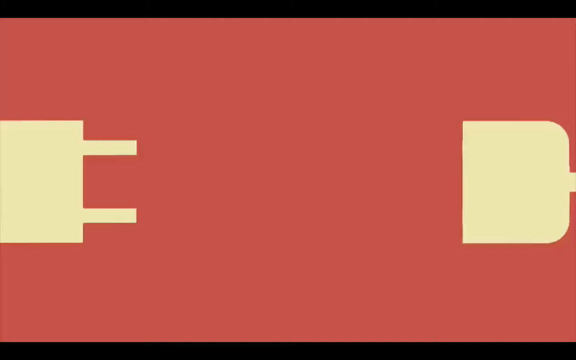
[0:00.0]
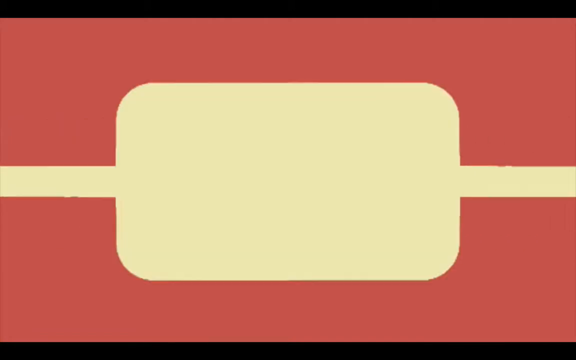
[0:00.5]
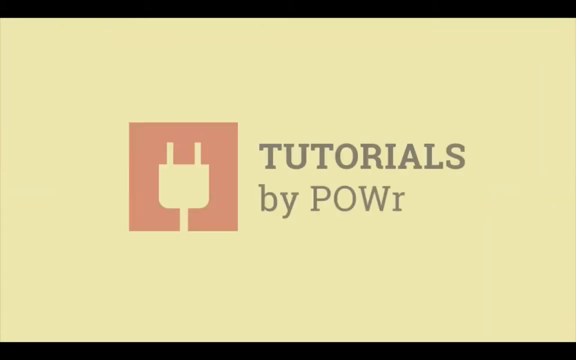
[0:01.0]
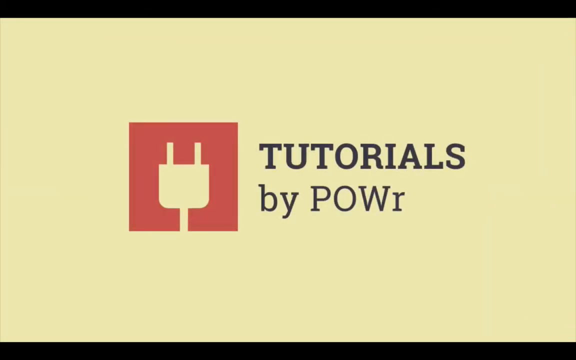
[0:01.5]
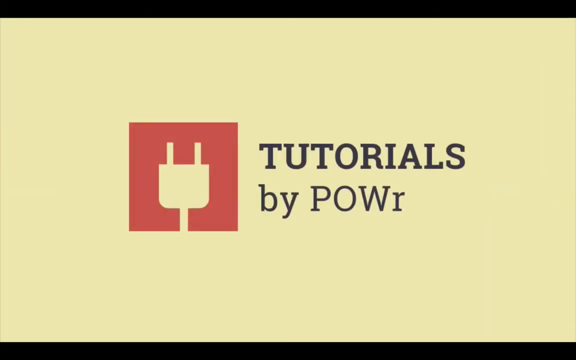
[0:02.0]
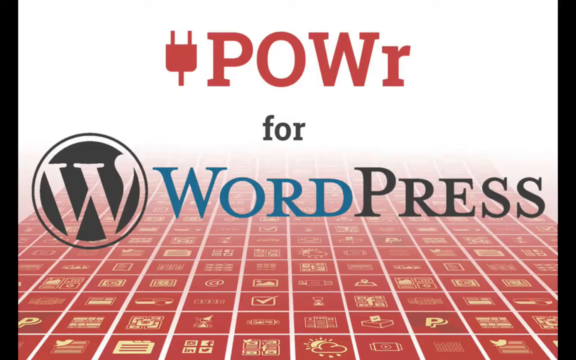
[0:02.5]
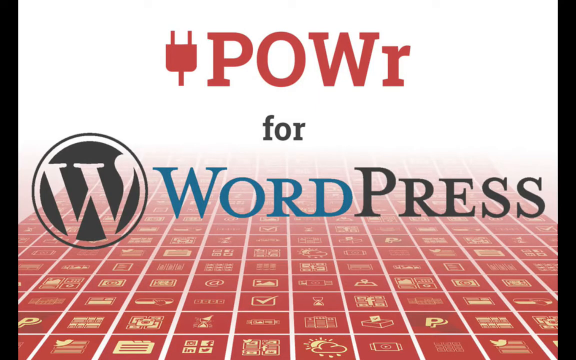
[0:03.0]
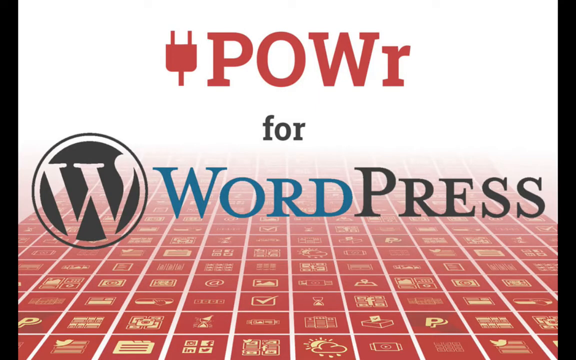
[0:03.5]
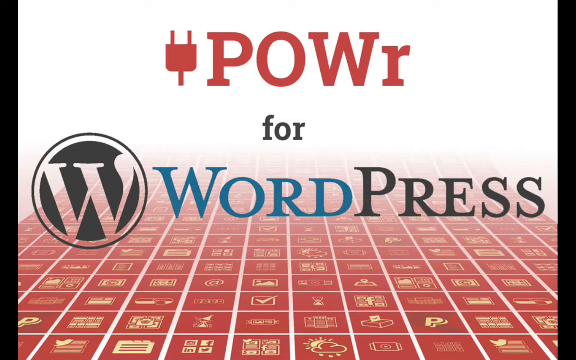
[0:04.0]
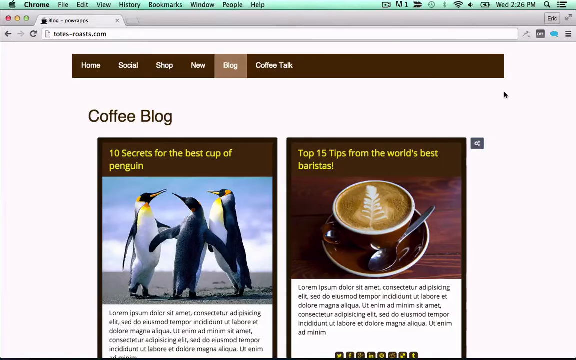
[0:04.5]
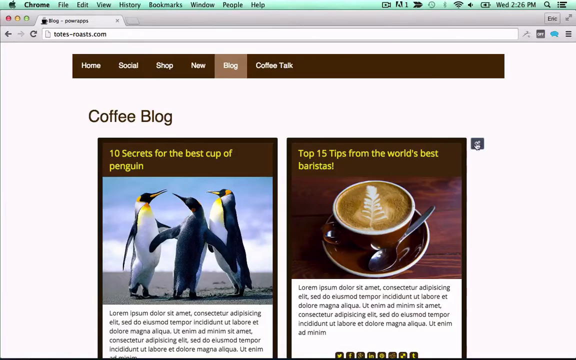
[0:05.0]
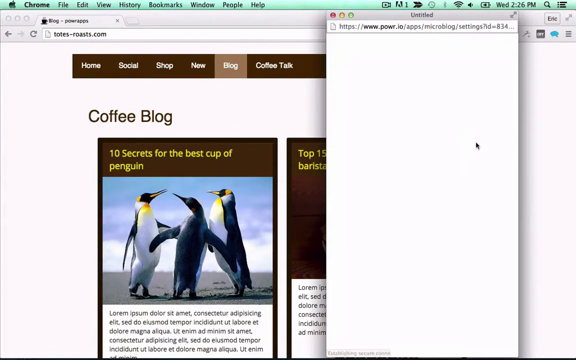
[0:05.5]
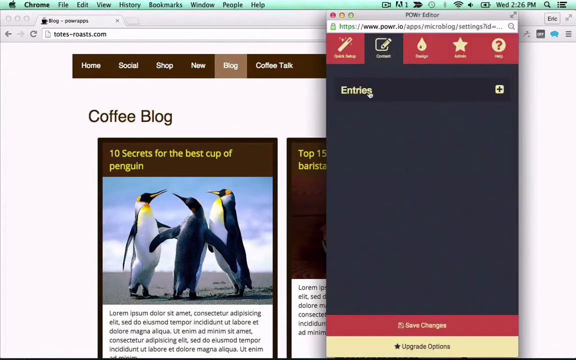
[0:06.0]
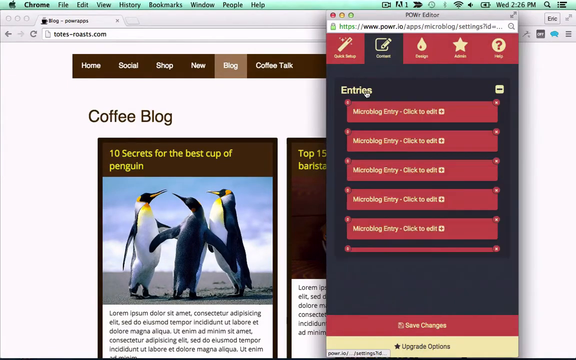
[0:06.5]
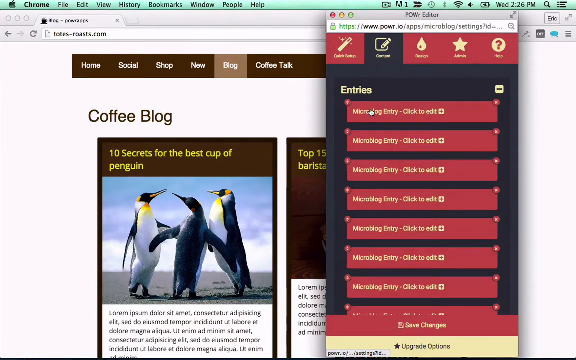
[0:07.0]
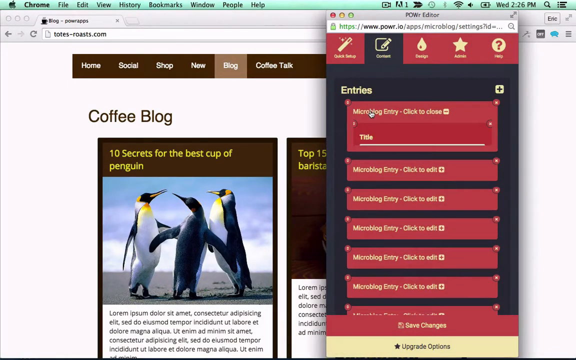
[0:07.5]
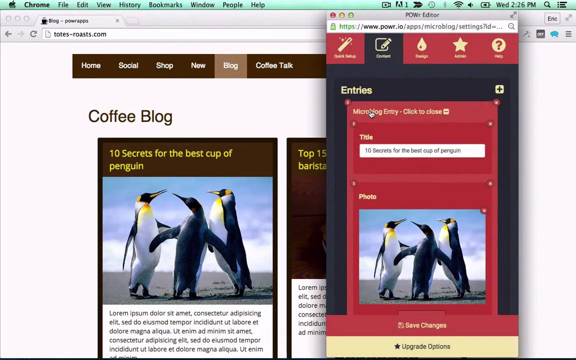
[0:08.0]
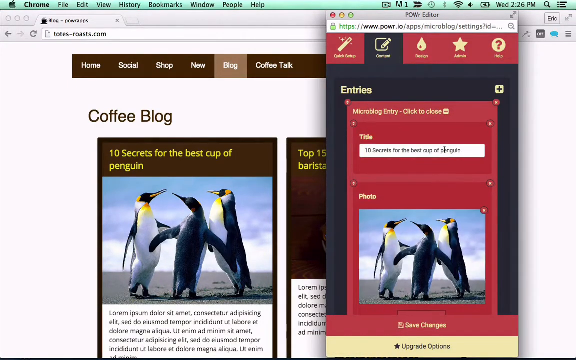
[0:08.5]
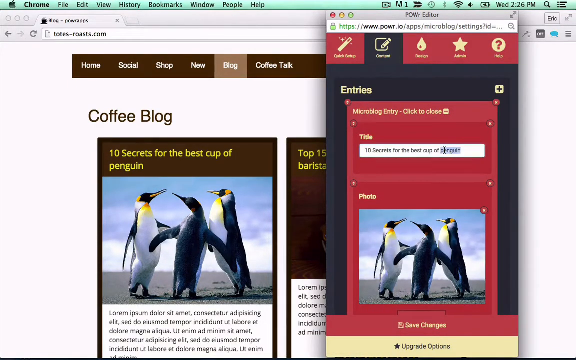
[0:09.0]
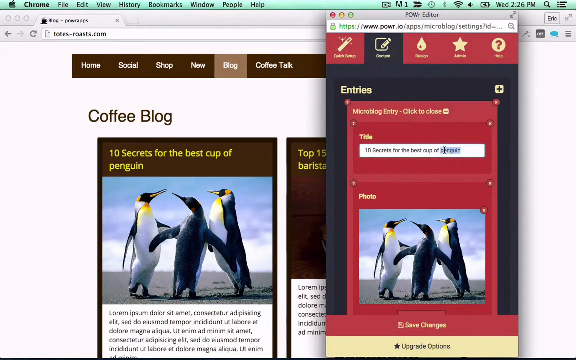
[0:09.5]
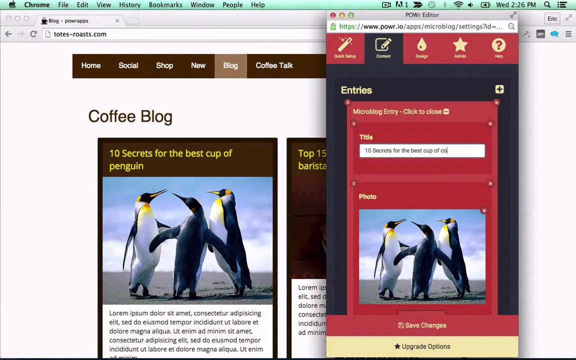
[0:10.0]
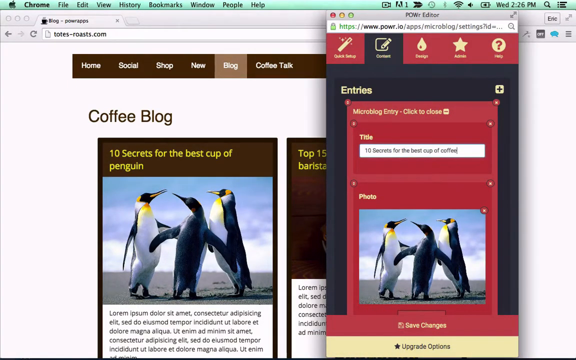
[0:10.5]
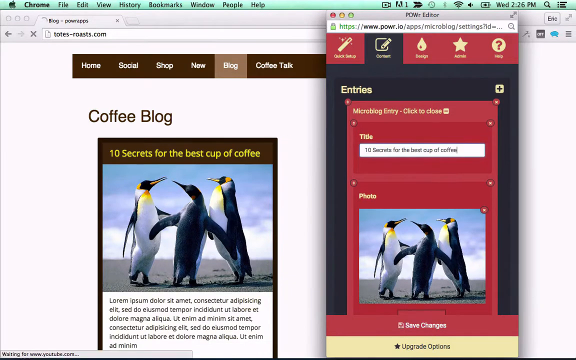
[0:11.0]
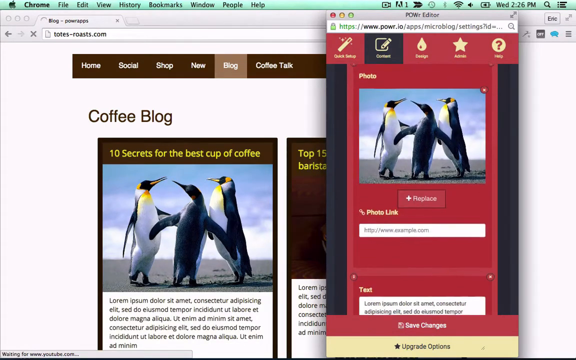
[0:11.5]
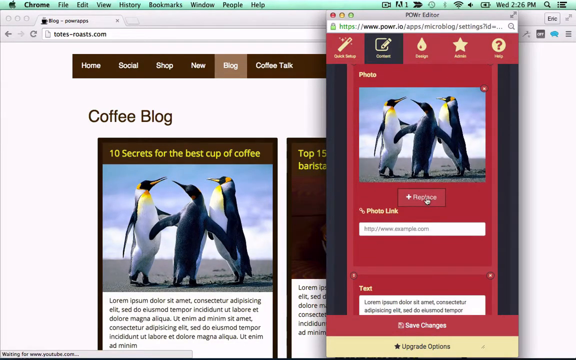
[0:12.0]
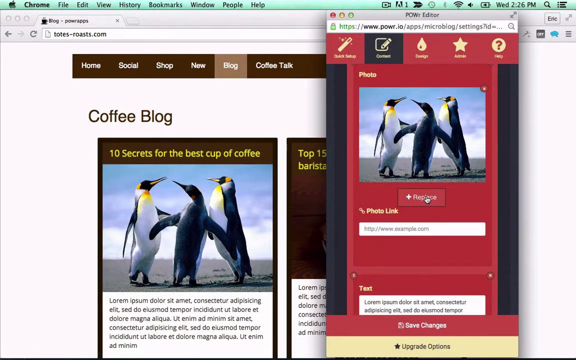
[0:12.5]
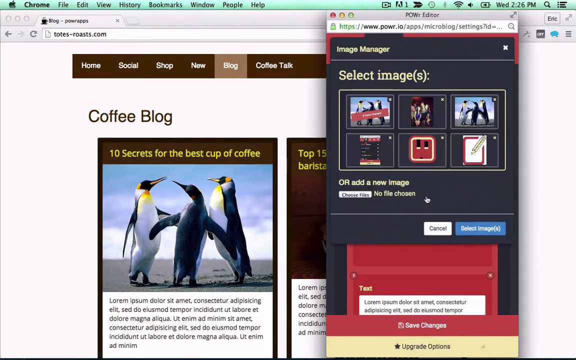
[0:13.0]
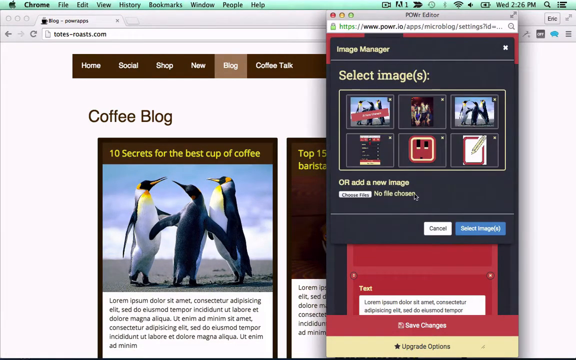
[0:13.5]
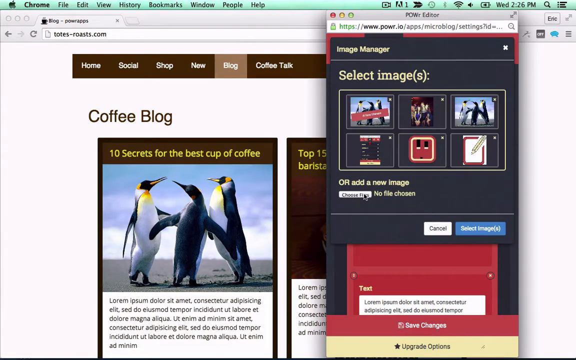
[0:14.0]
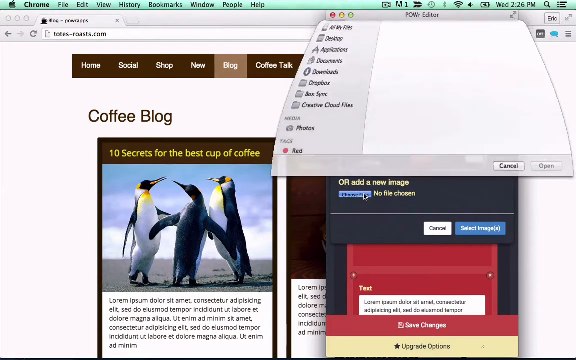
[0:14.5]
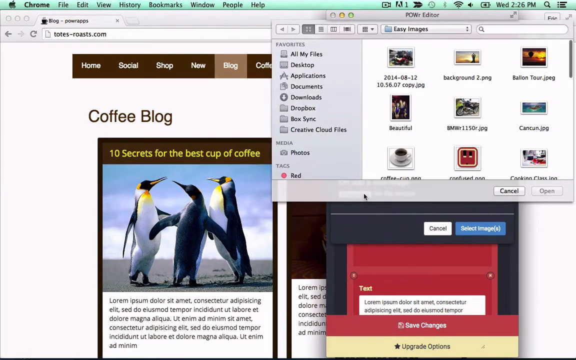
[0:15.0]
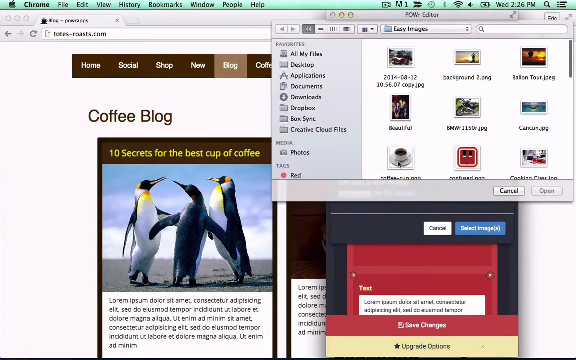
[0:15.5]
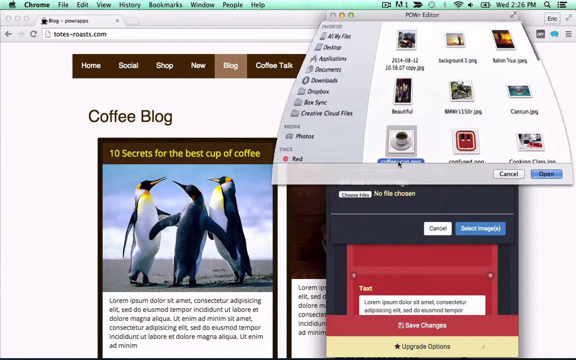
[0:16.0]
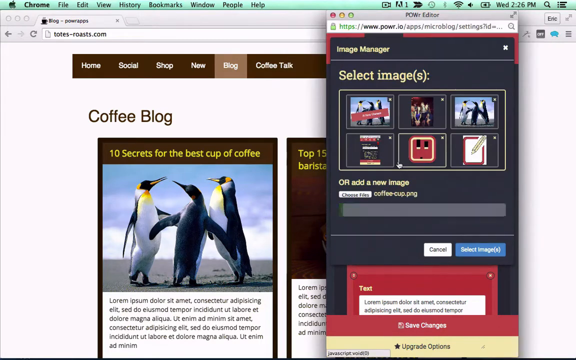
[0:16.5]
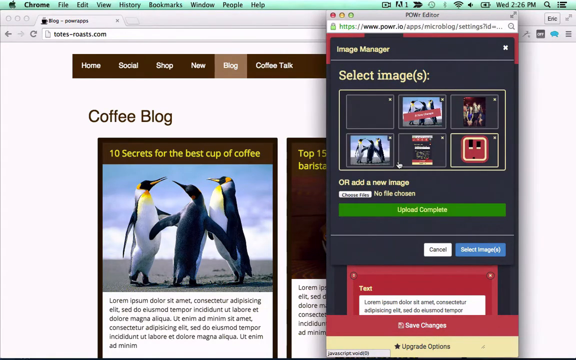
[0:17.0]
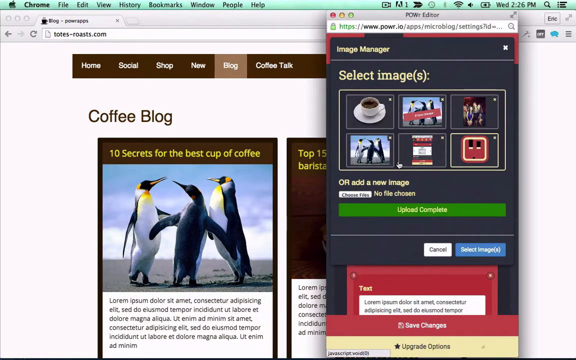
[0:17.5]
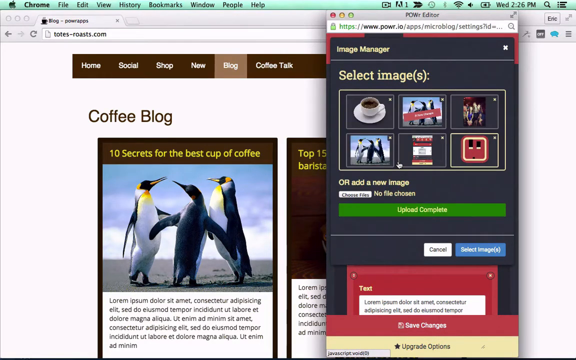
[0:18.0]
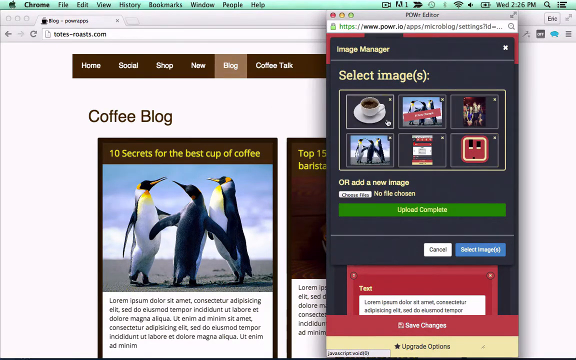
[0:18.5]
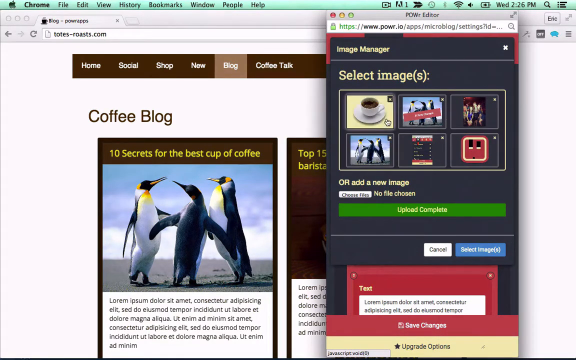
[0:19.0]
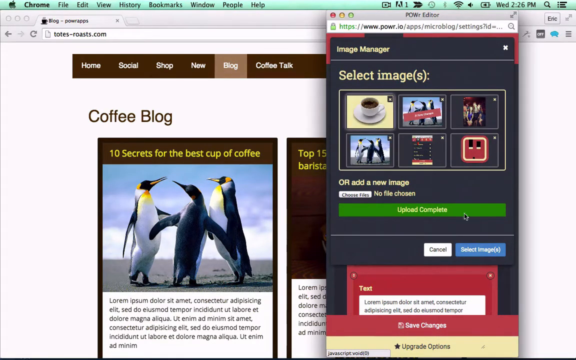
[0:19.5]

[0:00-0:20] The video opens on a red screen with a pale yellow plug and socket at either end, which then join together. The socket then appears in a logo with a red border, and next to it black text says "Tutorials by PowR". This moves to the top with the POWR logo, and underneath is "for WordPress" with the WordPress logo to the left; "Word" is in blue and "press" is in black. Below, in red, many different logos are visible. A computer screen follows, looking like a Mac of some kind, with a webpage open on a site called Totes Roasts showing a coffee blog. Someone opens a new screen on the right-hand side with entries on it, types "10 secrets for the best cup of coffee", and selects images to put on the coffee blog; images of coffee are generated and then one of a coffee cup is uploaded. On the left-hand side, the coffee blog shows different articles about cups of coffee, such as "10 secrets for the best cup of coffee", which first reads penguin and is then edited to coffee, with the penguin image changed from penguins to coffee.